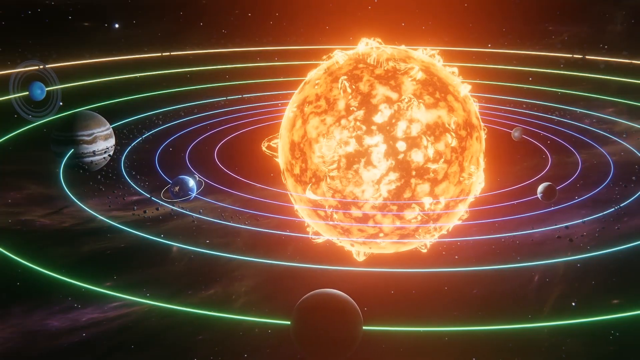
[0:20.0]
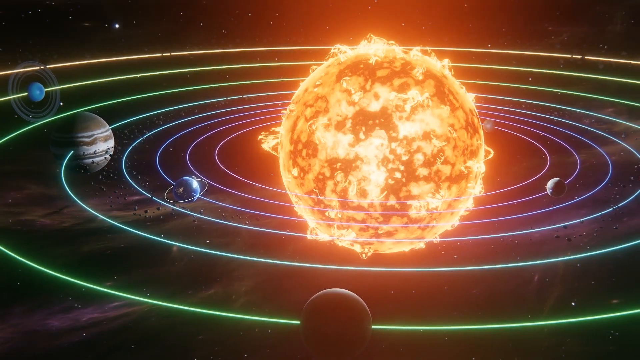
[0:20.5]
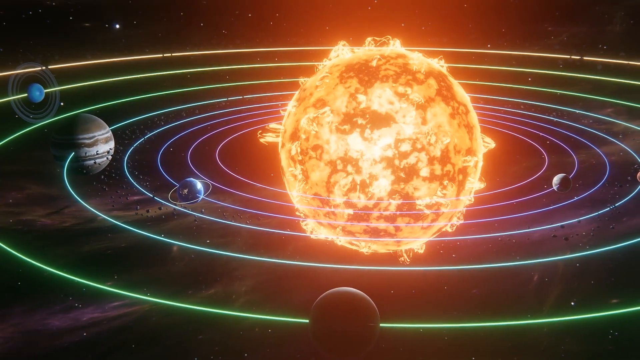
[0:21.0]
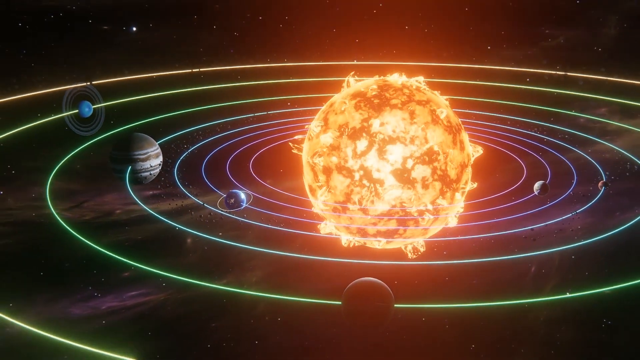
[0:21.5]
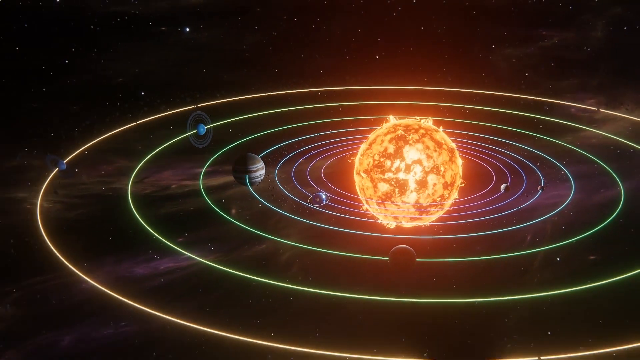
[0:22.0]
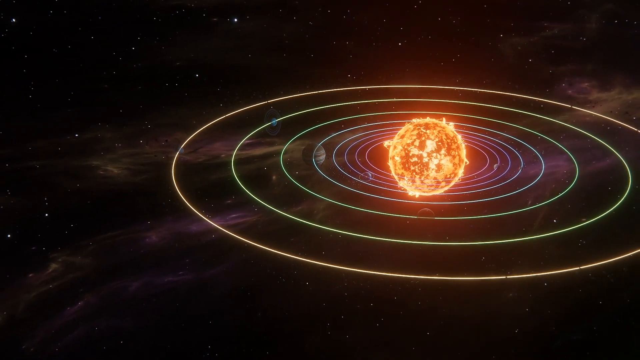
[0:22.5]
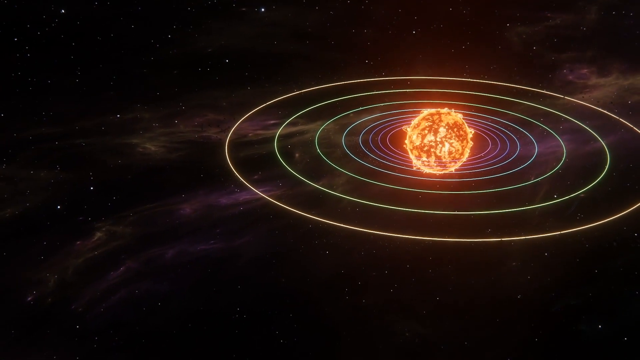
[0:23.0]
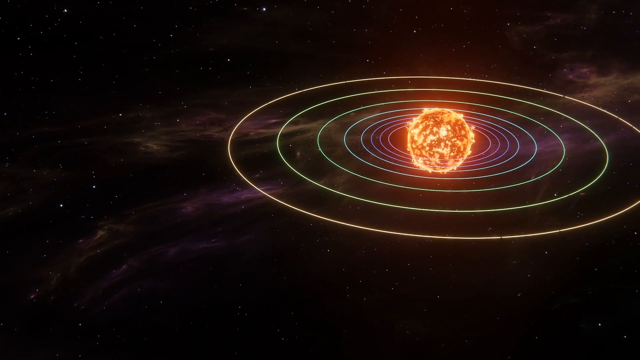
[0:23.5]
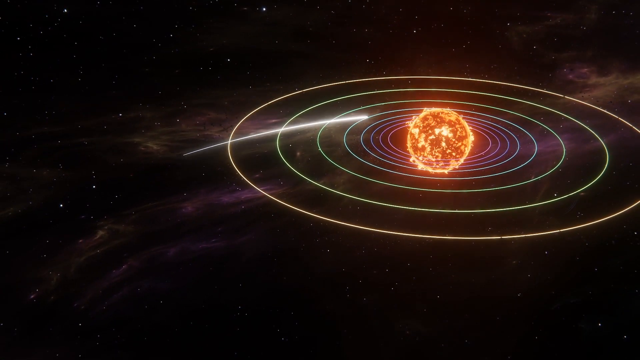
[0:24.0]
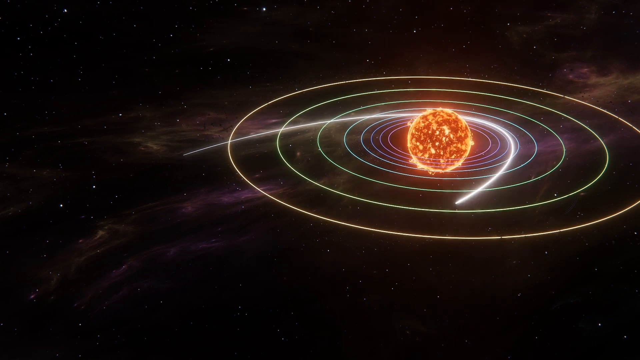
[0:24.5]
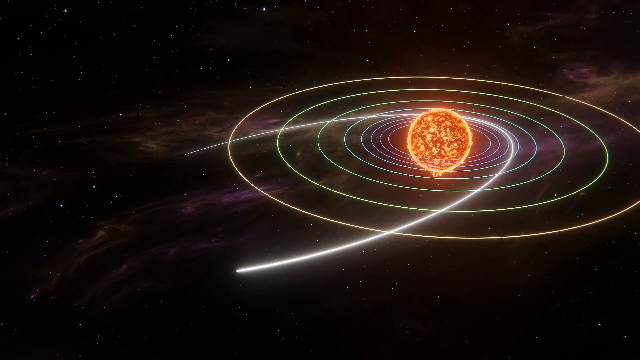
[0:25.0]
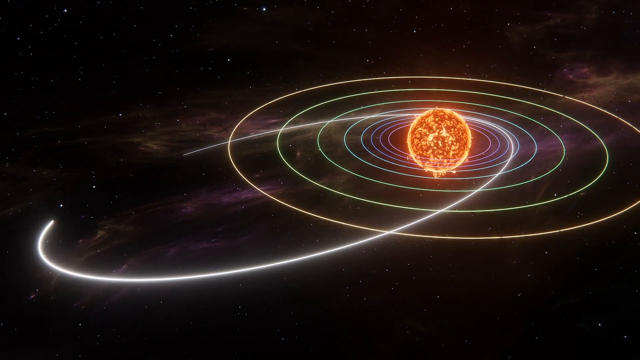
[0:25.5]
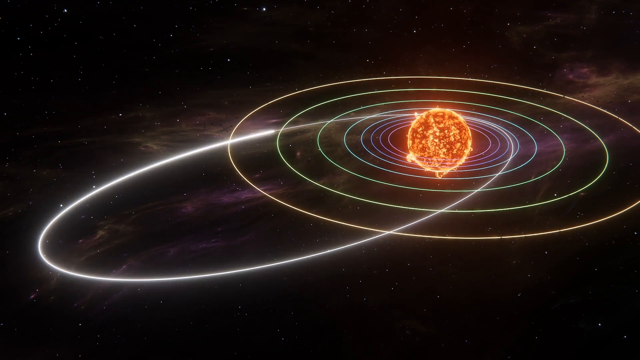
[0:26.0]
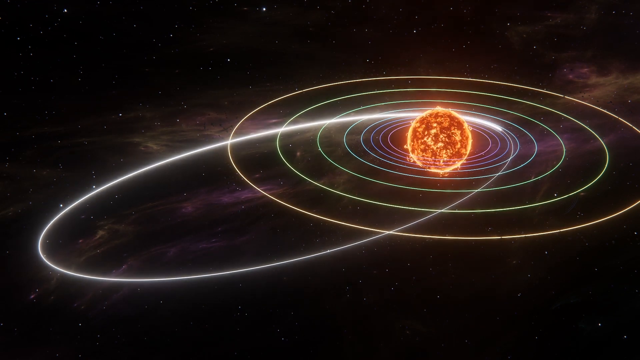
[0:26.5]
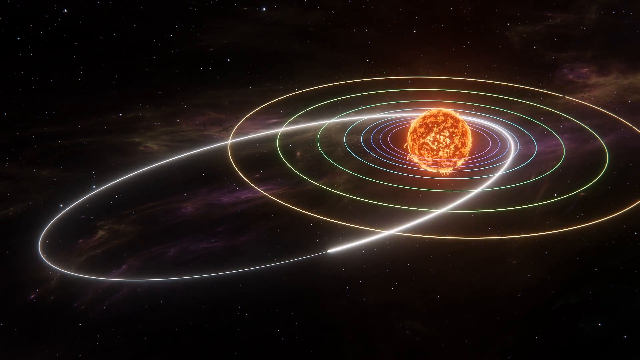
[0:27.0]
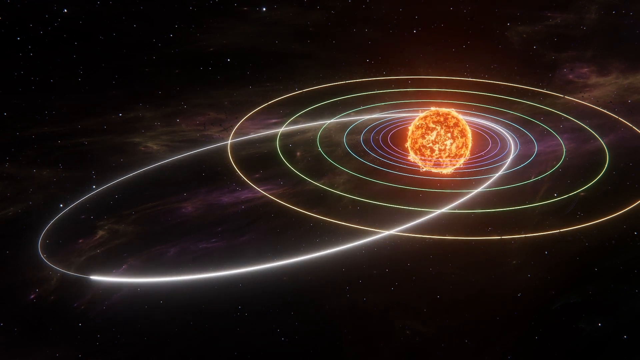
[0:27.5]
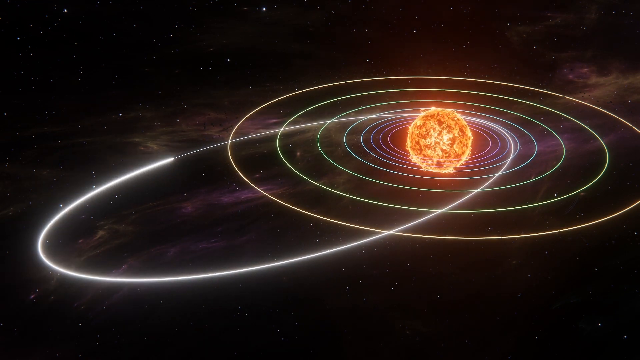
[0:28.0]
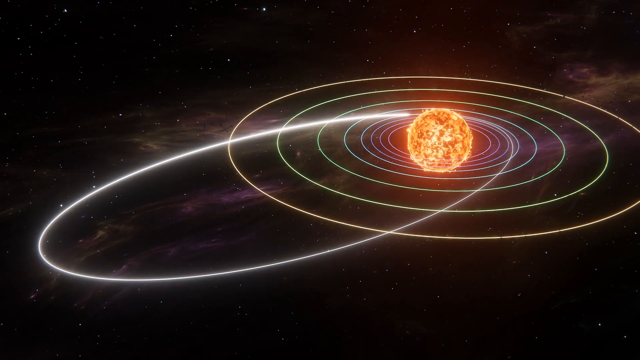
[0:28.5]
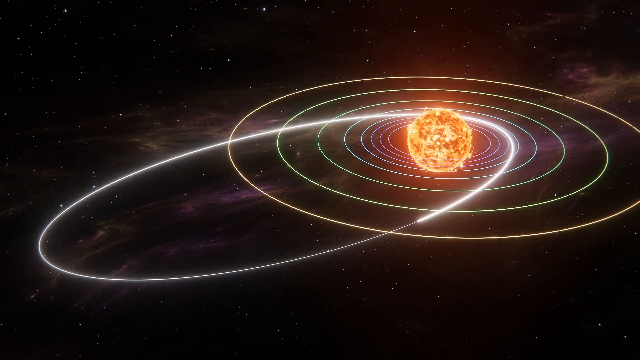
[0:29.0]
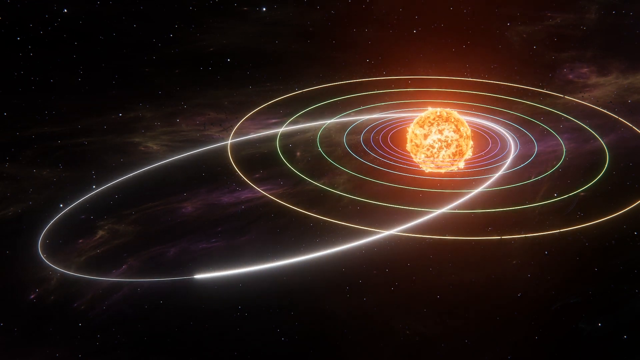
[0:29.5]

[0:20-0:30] Something, probably a comet, goes into orbit around the Sun. It comes in from an outer orbit that is bigger than the solar system: the orbit goes way out past the planets of our solar system, even past Pluto on the diagram, and then comes back in around the Sun.